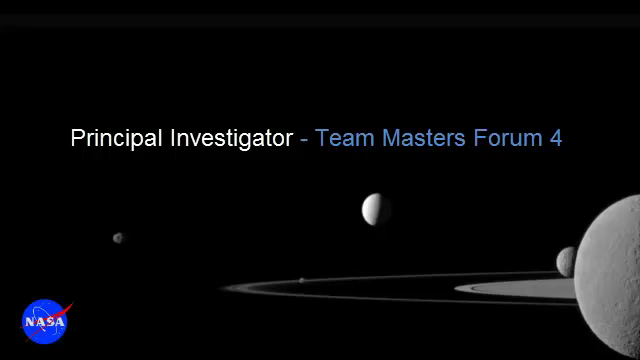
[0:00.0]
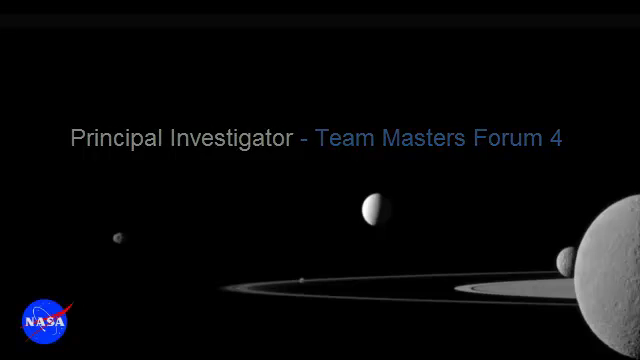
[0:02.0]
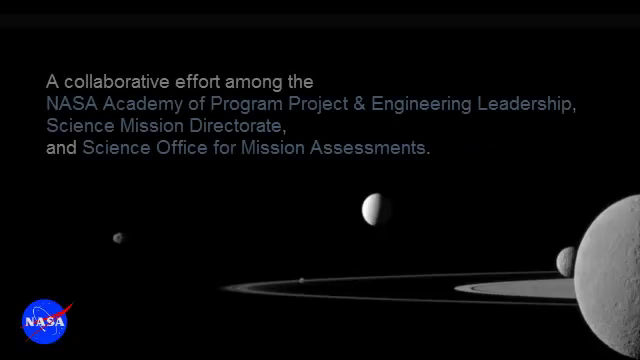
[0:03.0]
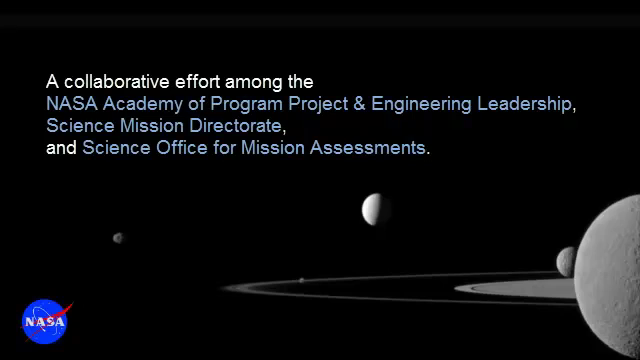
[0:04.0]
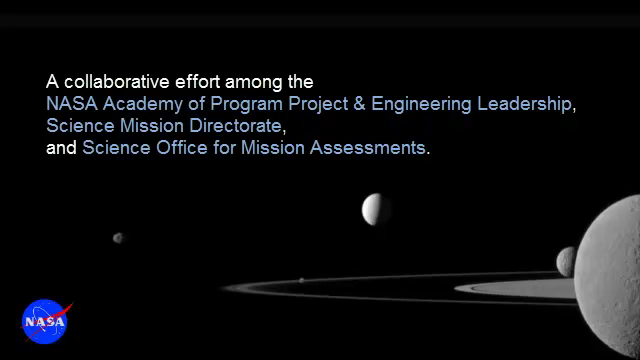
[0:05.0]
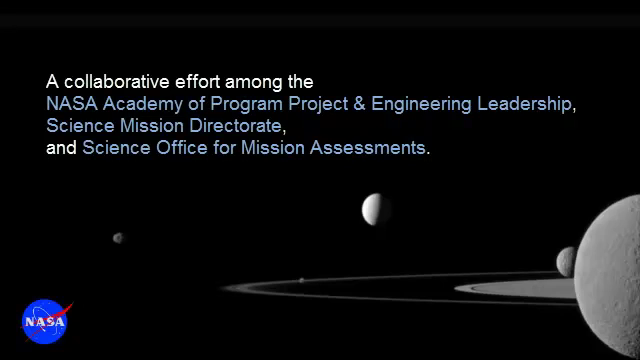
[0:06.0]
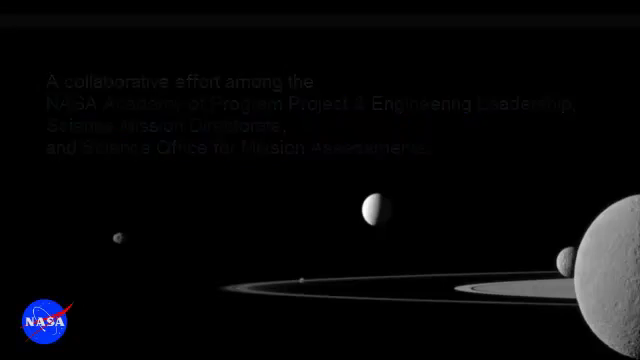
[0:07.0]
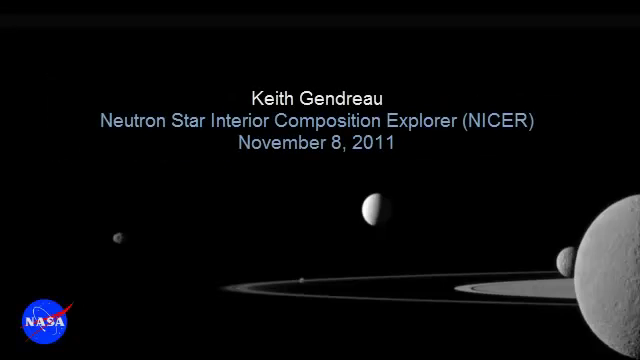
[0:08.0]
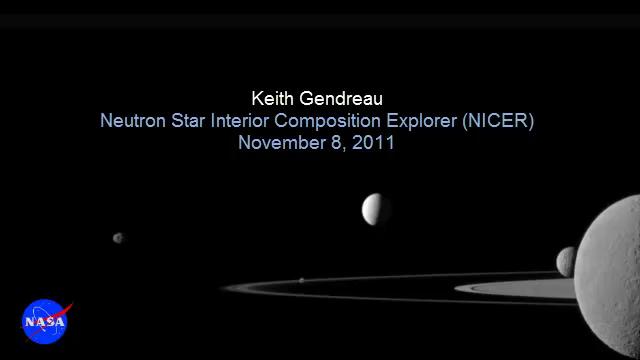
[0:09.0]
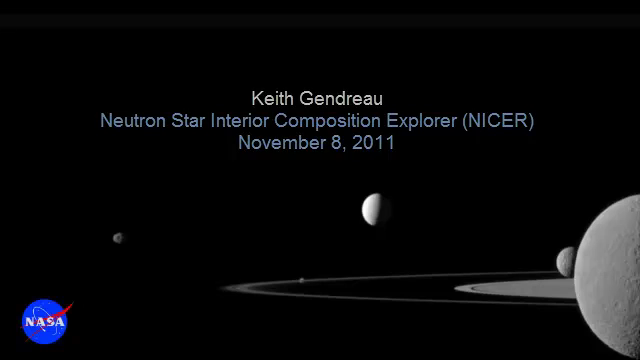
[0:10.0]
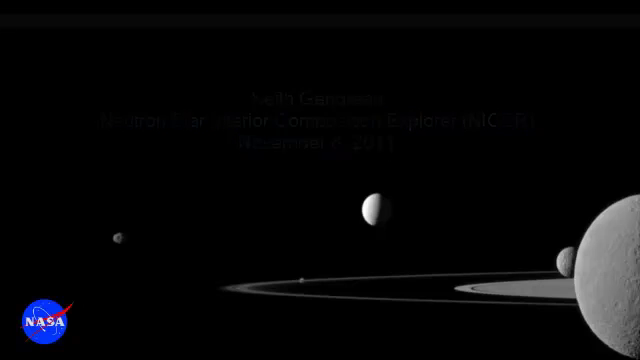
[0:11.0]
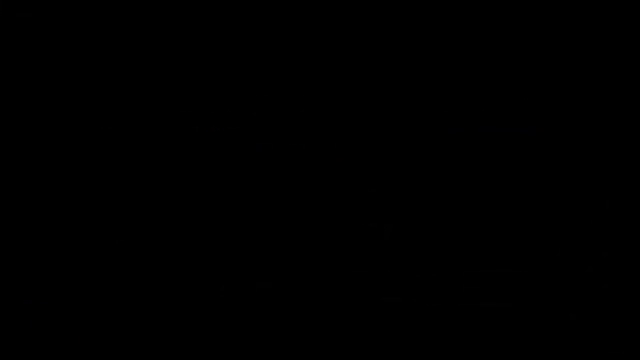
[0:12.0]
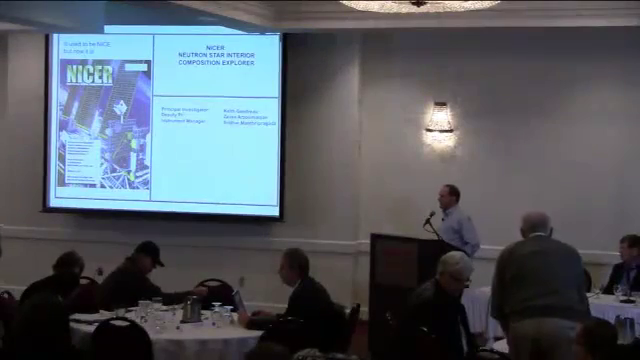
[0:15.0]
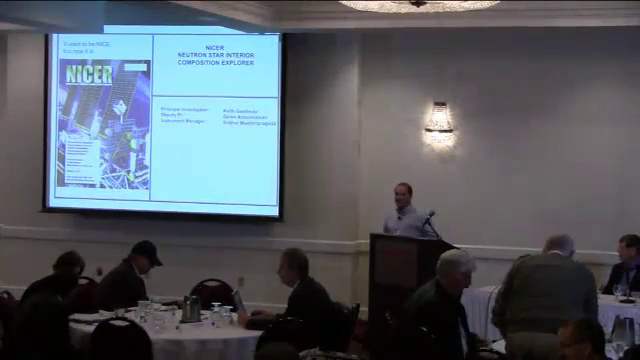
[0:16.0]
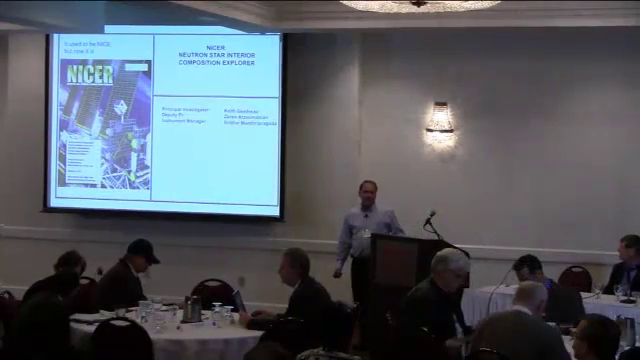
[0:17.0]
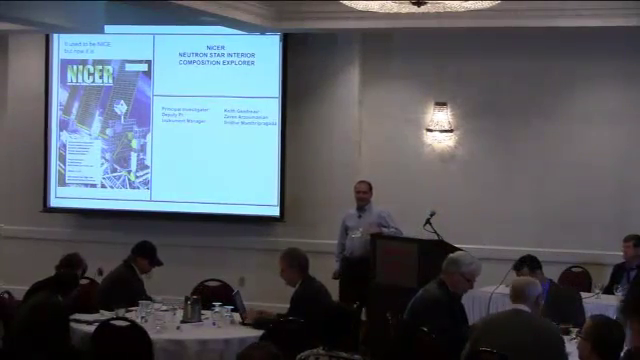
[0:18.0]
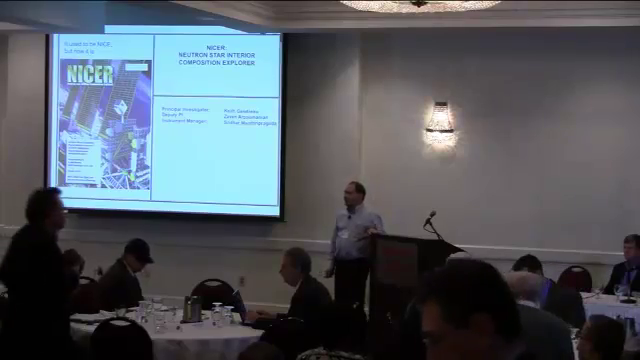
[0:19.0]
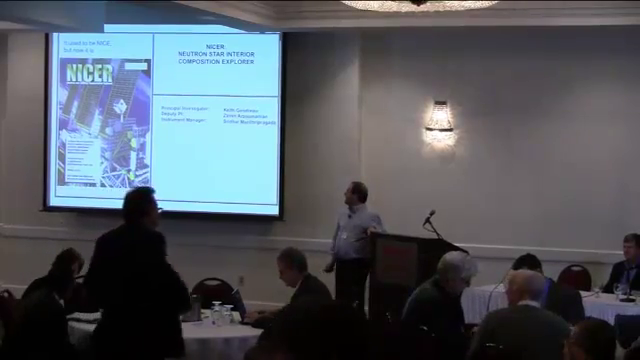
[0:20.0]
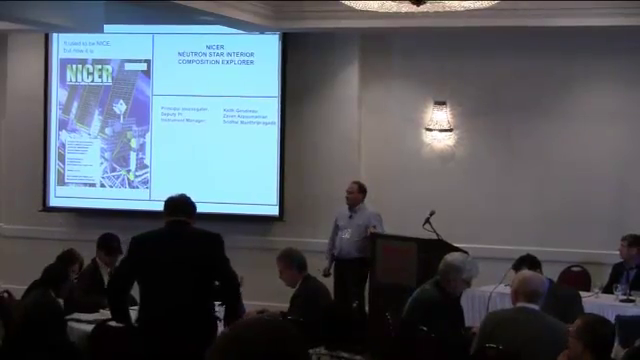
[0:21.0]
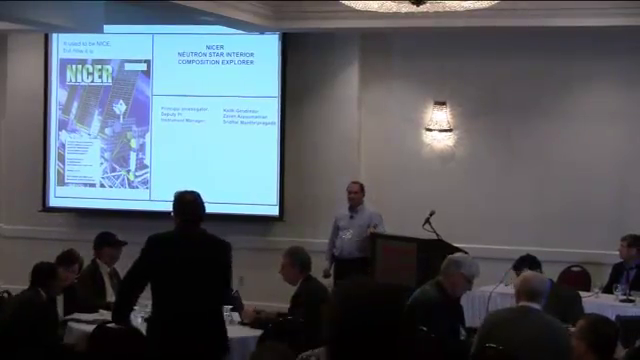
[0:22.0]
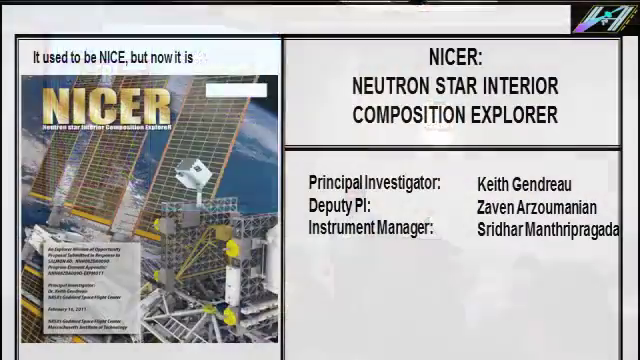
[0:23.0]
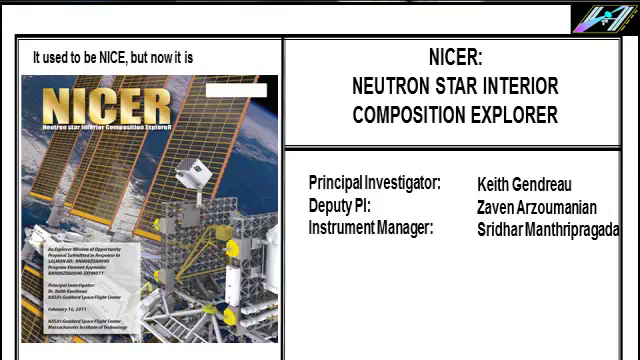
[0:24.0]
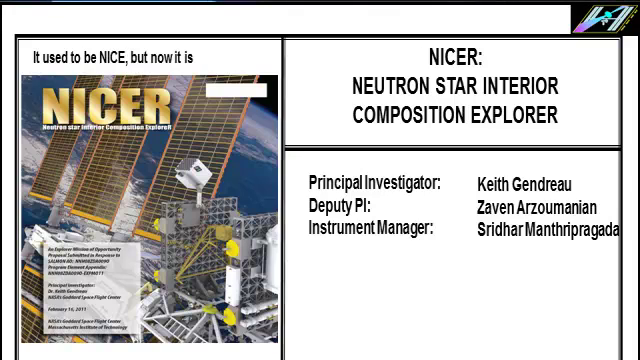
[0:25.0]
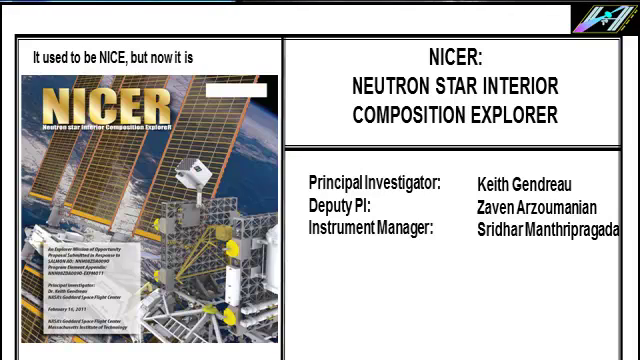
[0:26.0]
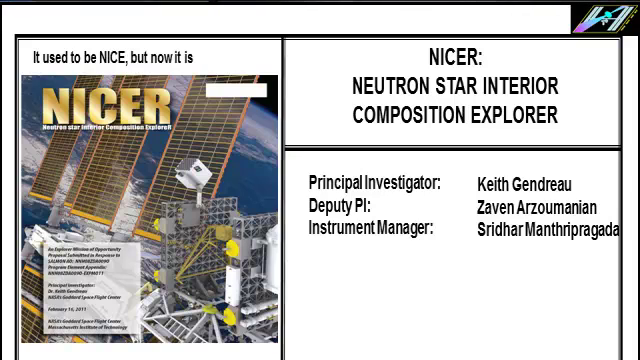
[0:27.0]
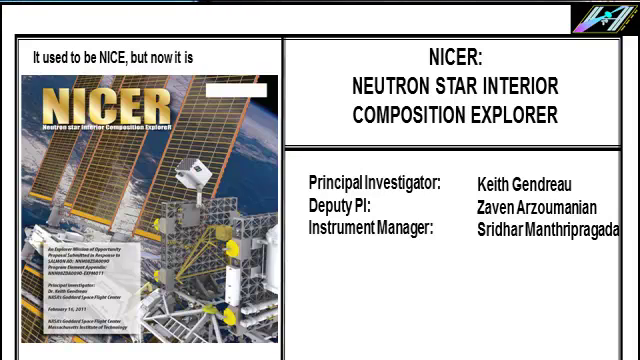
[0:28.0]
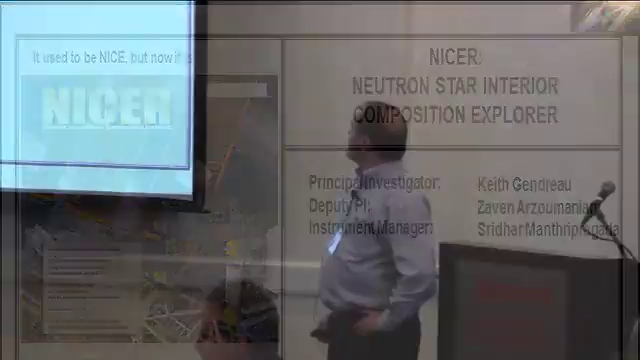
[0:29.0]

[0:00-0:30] Against a black background, half of a planet appears in the very center of the screen. In the lower right corner there is a large planet with a smaller planet to its left, and some white circles go around where the smaller planet is. A NASA symbol is in the bottom left corner. In the center of the screen above the planets, text reads "Principal Investigator Team Masters Forum 4." The background stays the same while the text changes to "a collaborative effort among the NASA Academy of Program Project and Engineering Leadership, Science Mission Directorate, and Science Office for Mission Assessments." The text changes again to "Keith Gendreau, Neutron Star Interior Composition Explorer," with "N-I-C-E-R" in parentheses, and "November 8, 2011" at the bottom. The screen goes black for a moment, and then a conference room with white walls appears. On the left is a large screen showing a picture on its left side with the title NICER, N-I-C-E-R. A man in a light-colored button-down shirt is behind a podium near a microphone, and several men are sitting around tables in front of the podium: three men are visible at the table on the left and three at the table on the right. Most of them are older with white hair, and two have dark hair. The man steps to the side of the podium. Then there is a close-up of the screen. In the upper left above the picture it says "it used to be nice, but now it is," and the picture shows some kind of space equipment with the earth in the background, with "NICER" in the picture's upper left corner. On the right side, black wording says "NICER Neutron Star Interior Composition Explorer," and beneath that "principal investigator Keith Gendreau, deputy PI Zavin Arzoumanian, Instrument manager Sridhar Manthripragada."